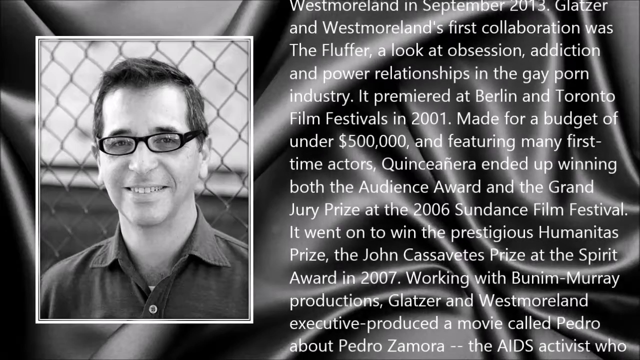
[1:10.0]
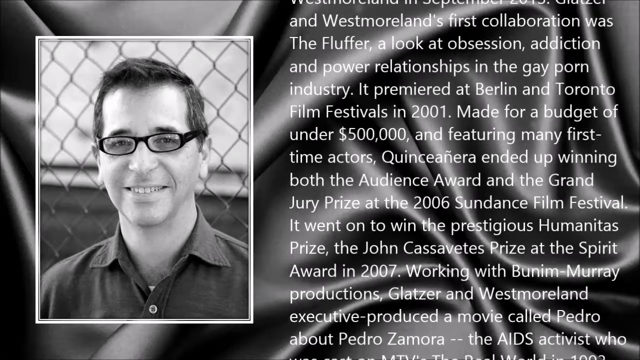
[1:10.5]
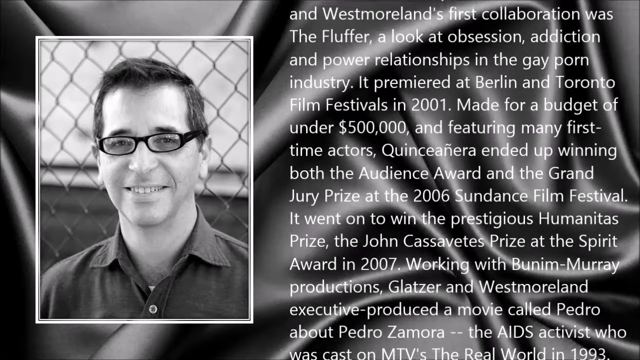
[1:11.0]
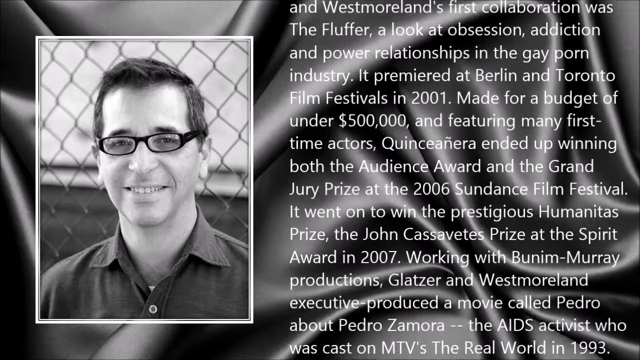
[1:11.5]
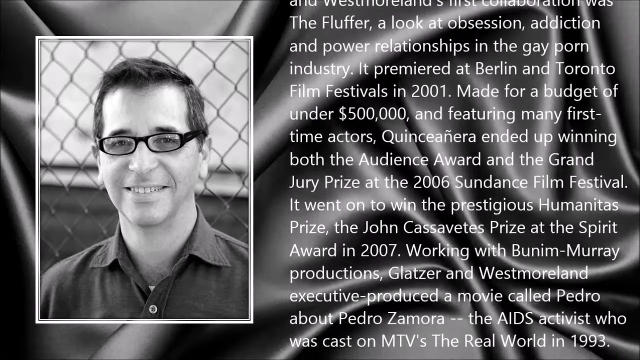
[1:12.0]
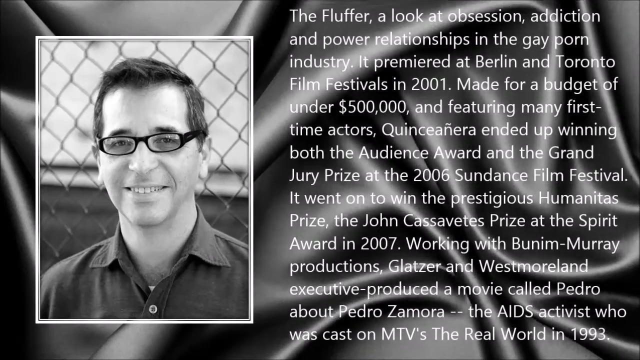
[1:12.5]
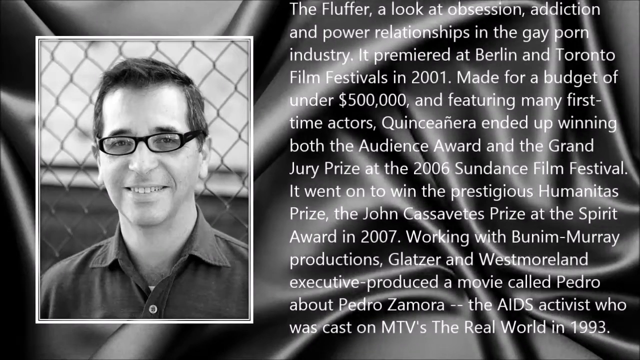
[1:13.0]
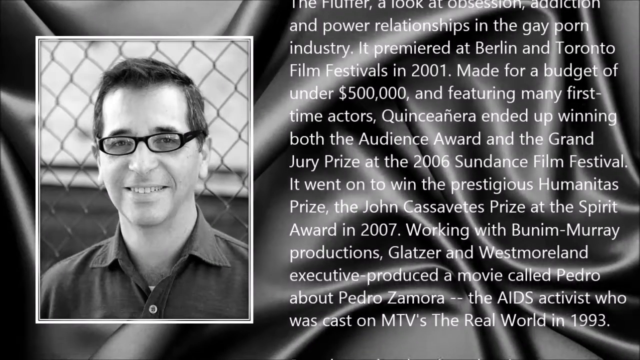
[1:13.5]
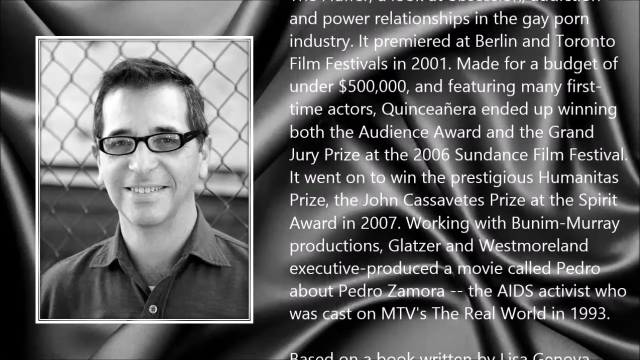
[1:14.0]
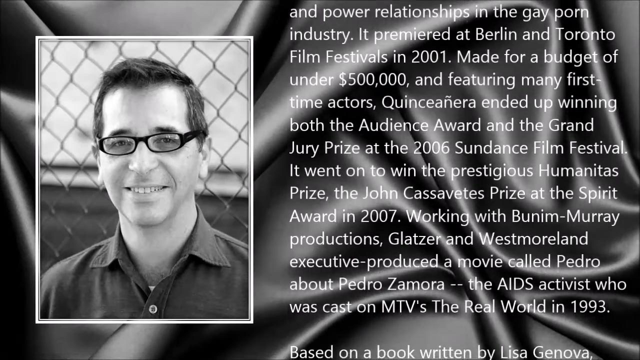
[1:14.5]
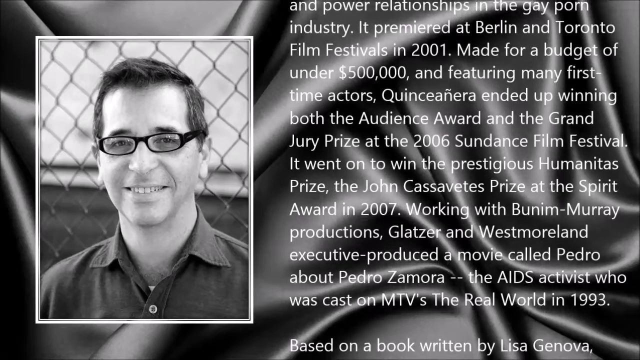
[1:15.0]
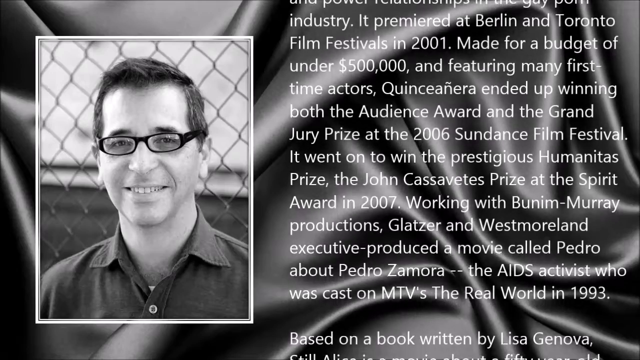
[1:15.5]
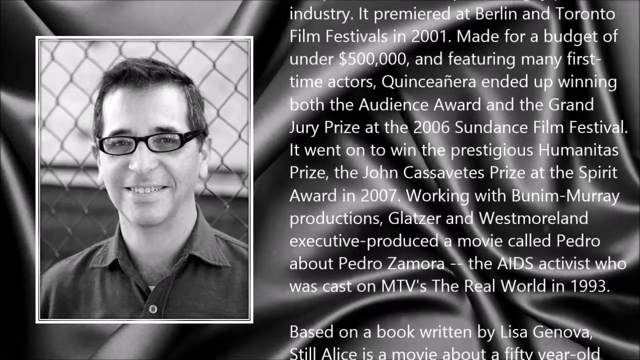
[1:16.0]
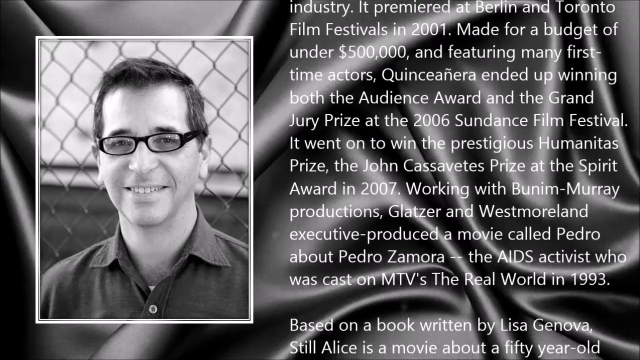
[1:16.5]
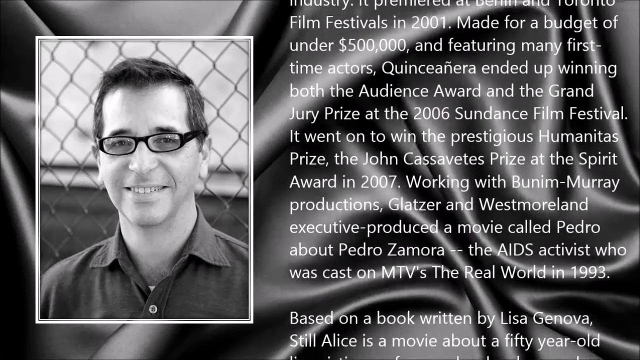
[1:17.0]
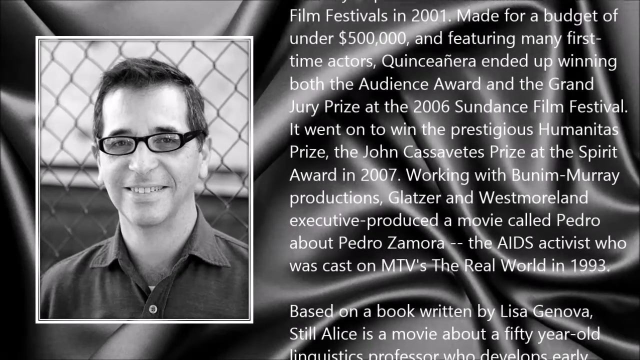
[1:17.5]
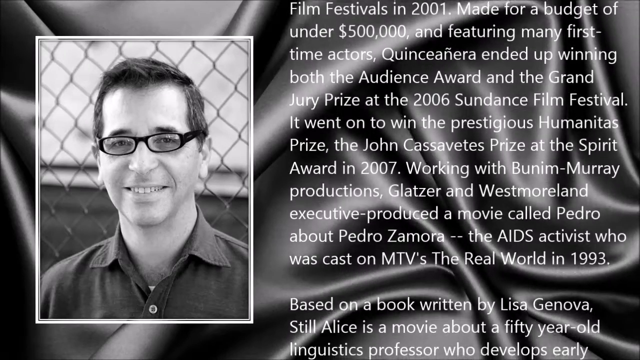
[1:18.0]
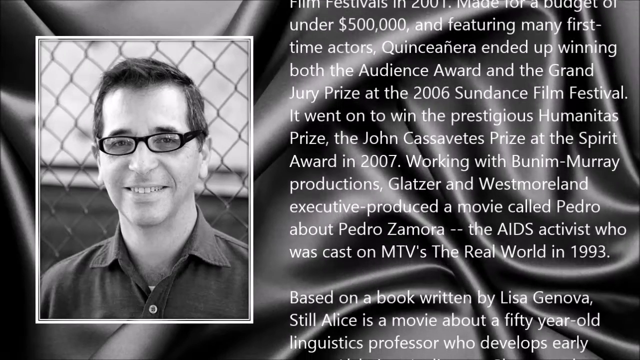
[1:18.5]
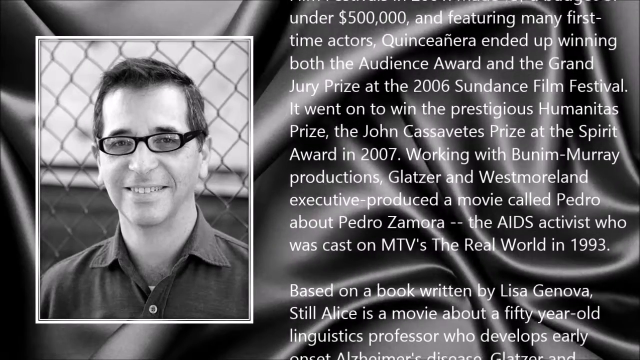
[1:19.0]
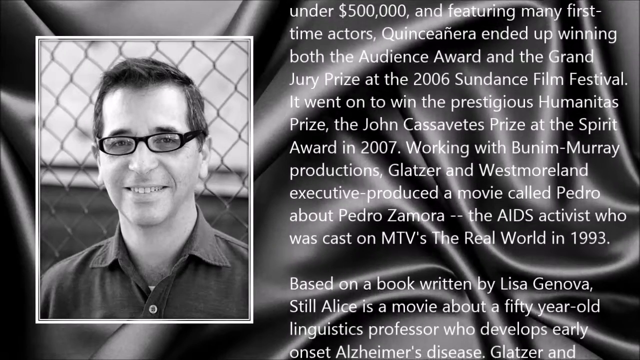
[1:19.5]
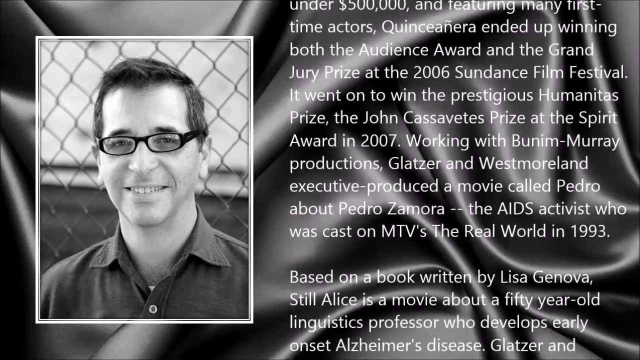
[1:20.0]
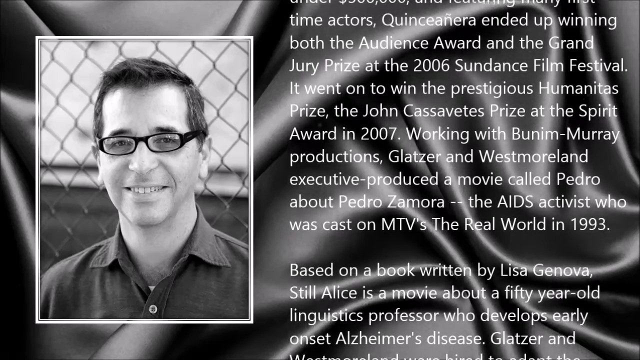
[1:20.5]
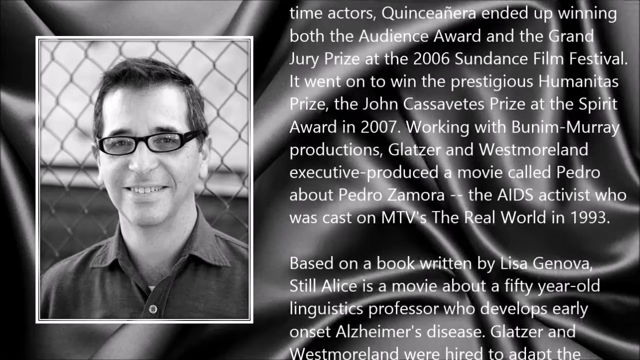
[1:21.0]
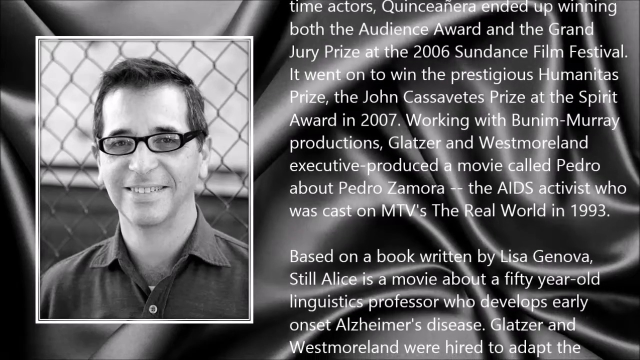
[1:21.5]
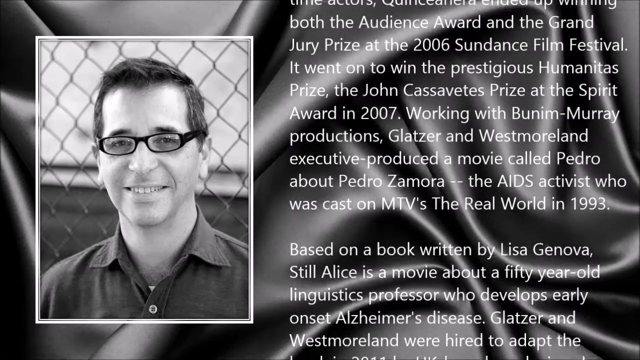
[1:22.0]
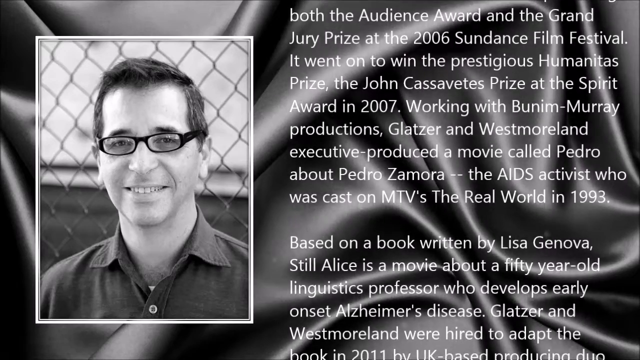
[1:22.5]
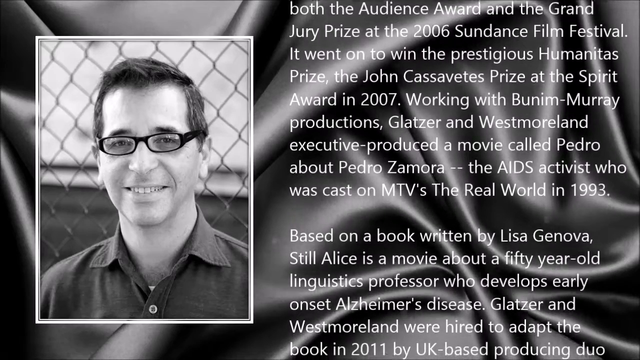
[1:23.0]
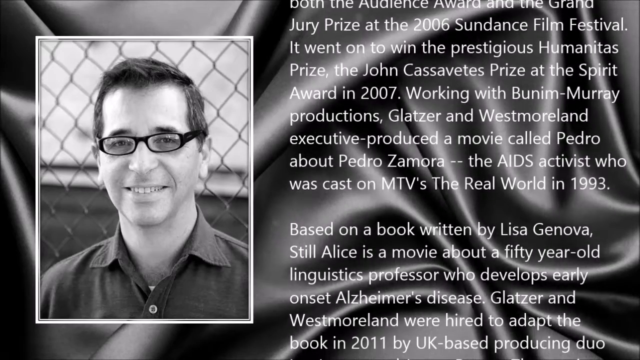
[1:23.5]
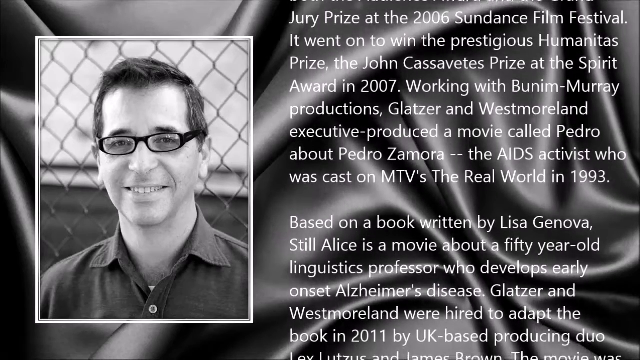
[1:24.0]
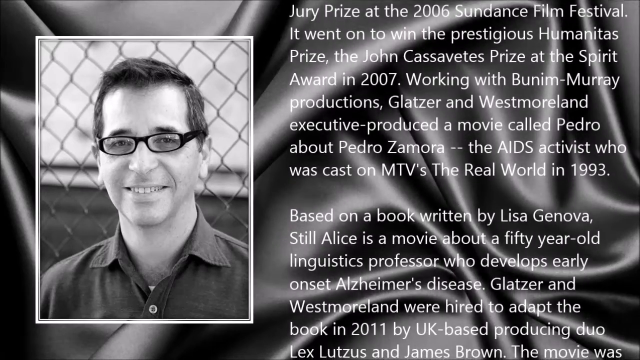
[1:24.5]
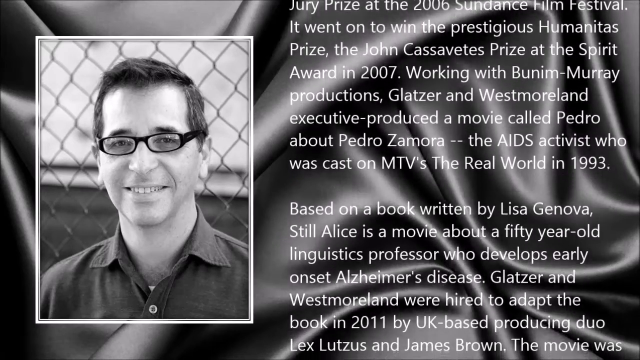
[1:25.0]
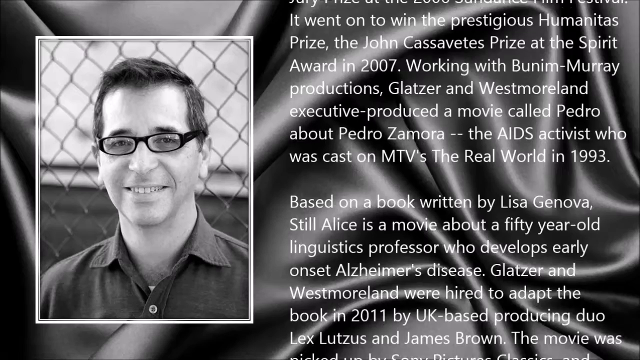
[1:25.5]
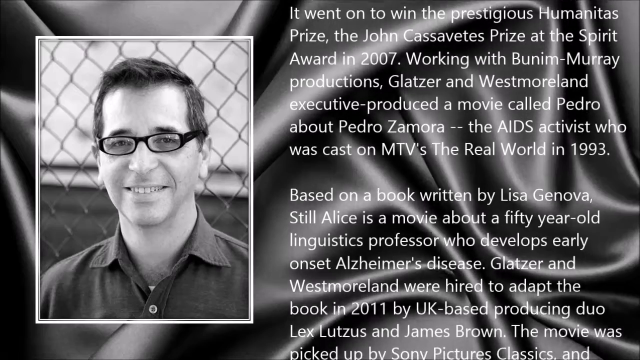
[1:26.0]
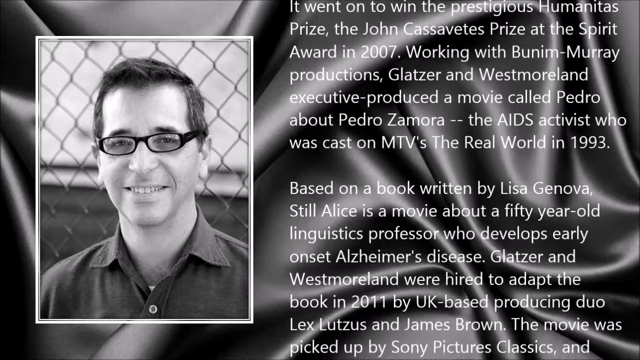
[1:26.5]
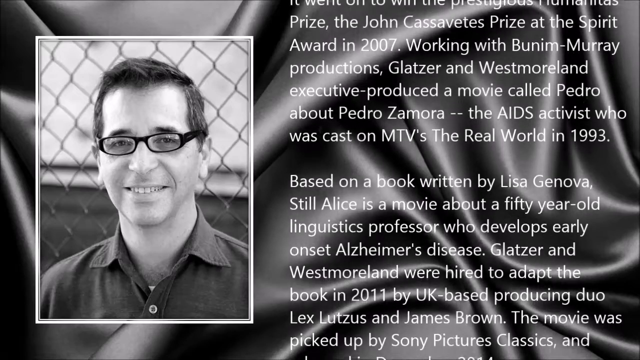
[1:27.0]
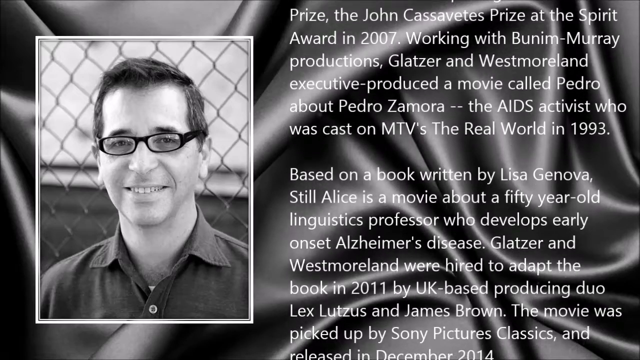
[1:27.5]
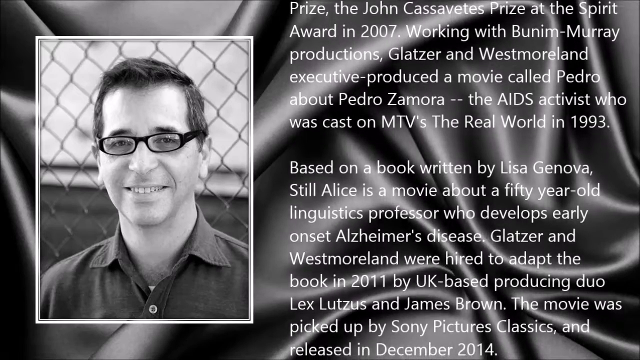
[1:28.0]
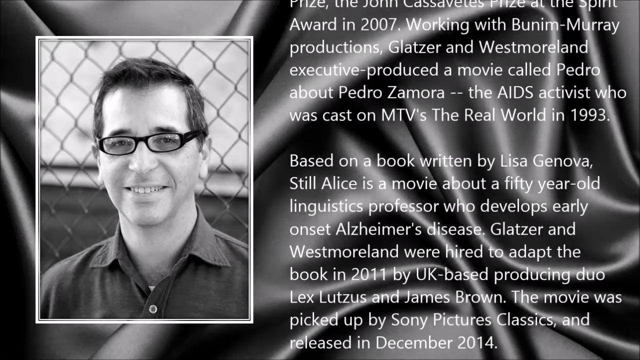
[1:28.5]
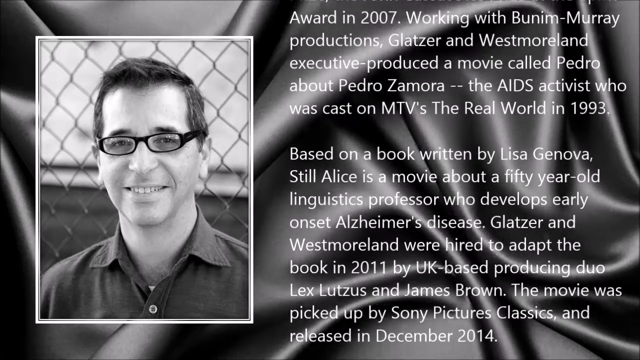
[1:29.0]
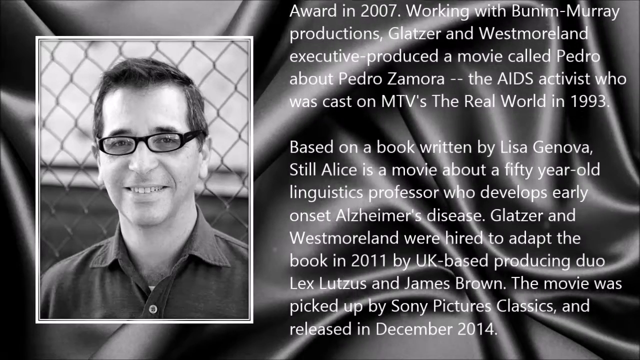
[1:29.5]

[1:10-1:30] The memorial for director Richard Glatzer continues with a picture of Richard on the left of the screen. He is a man in his 50s with brown hair, in a picture that is apparently black and white. He wears black plastic rectangular glasses and a colored collared shirt, and he is standing in front of a chain-link fence, smiling. Text describing his work scrolls up to the right of the picture: "Working with Bunim-Murray Productions, Glatzer and Westmoreland executive produced a movie called Pedro about Pedro Zamora, the AIDS activist who was on MTV's The Real World in 1993. Based on a book written by Lisa Genova, Still Alice is a movie about a 50-year-old linguistics professor who develops early onset Alzheimer's disease. Glatzer and Westmoreland were hired to adapt the book in 2011 by a UK-based producing duo, Lex Lutzes and James Brown."